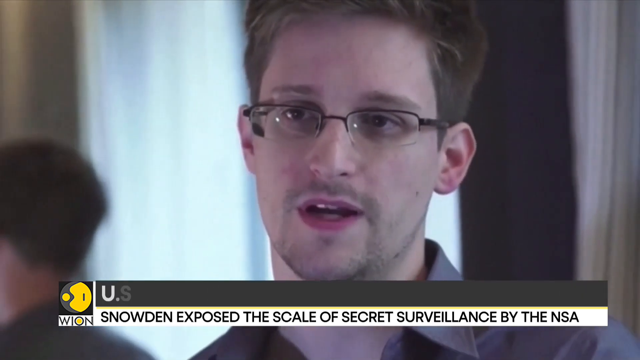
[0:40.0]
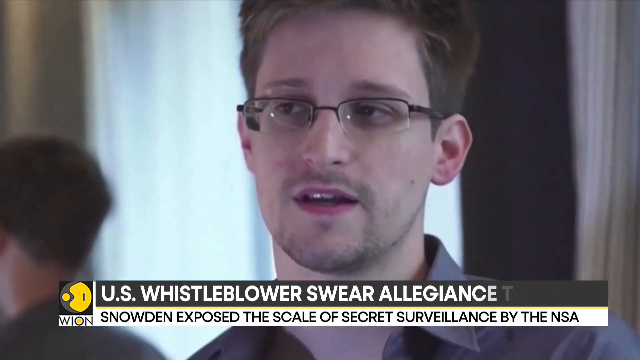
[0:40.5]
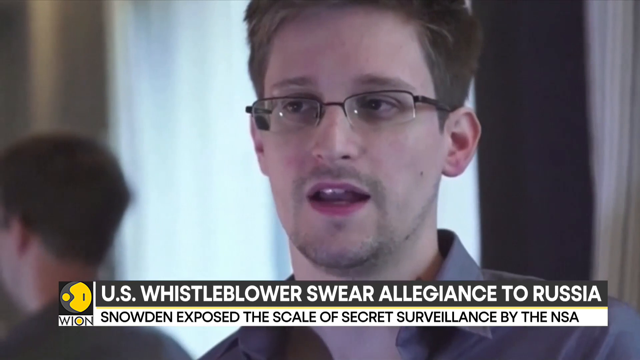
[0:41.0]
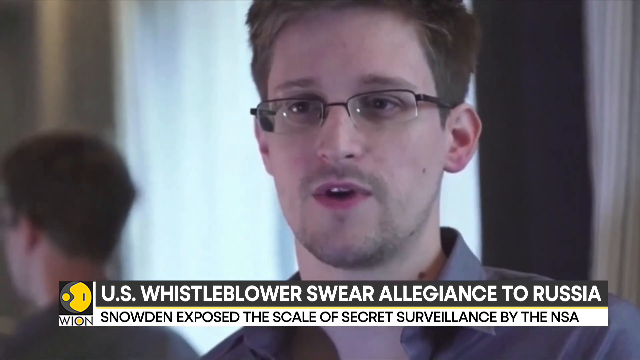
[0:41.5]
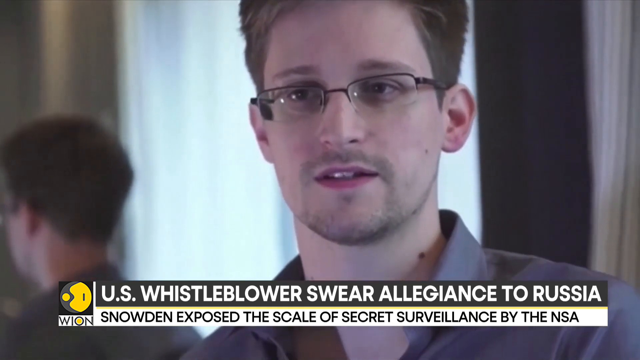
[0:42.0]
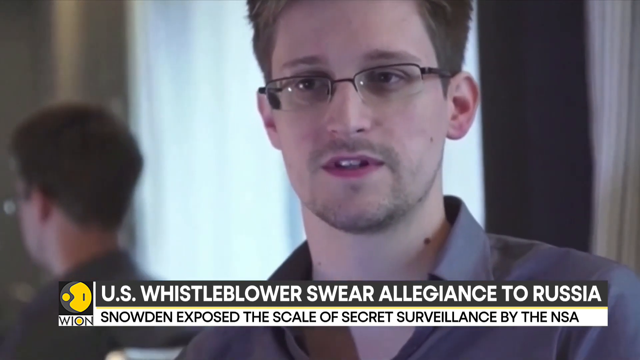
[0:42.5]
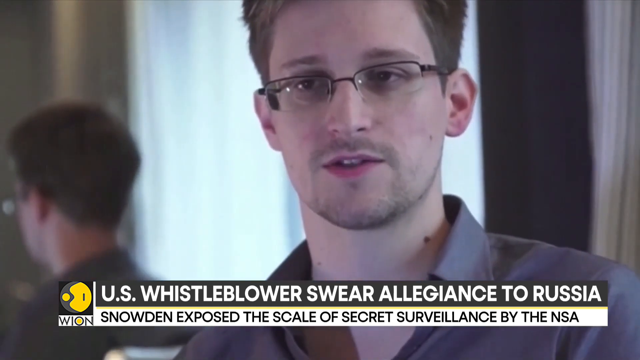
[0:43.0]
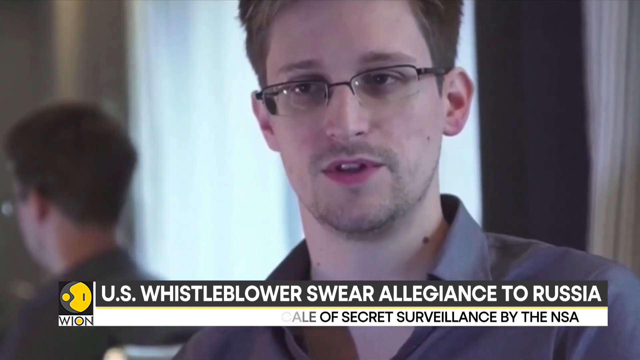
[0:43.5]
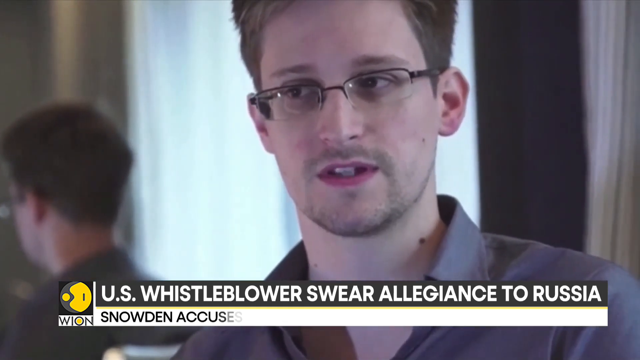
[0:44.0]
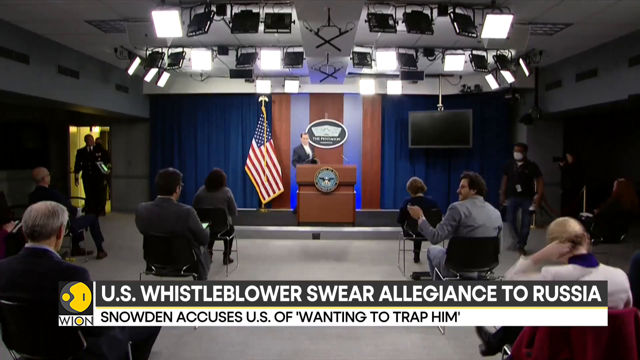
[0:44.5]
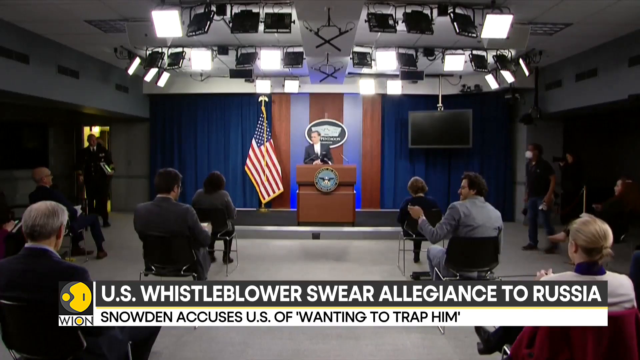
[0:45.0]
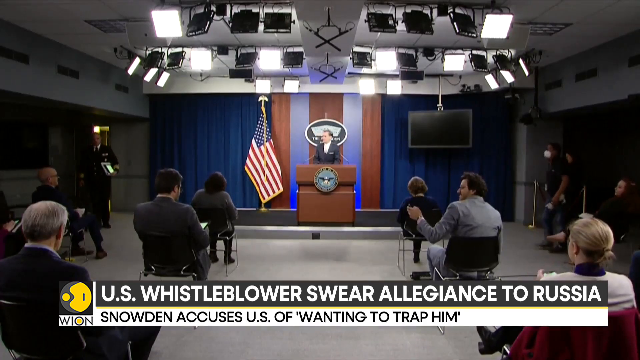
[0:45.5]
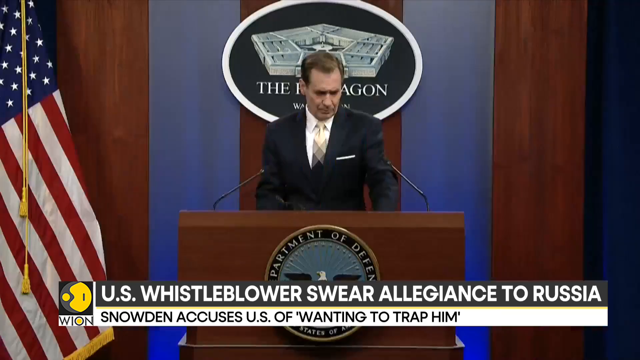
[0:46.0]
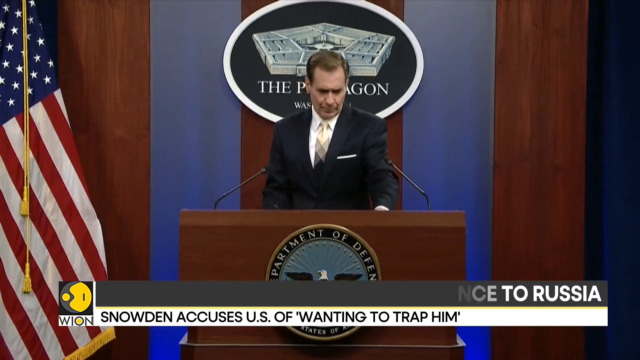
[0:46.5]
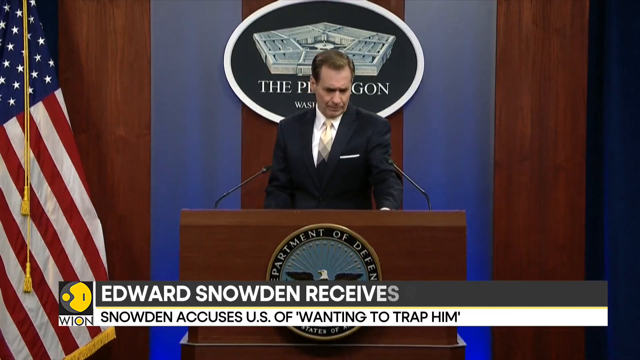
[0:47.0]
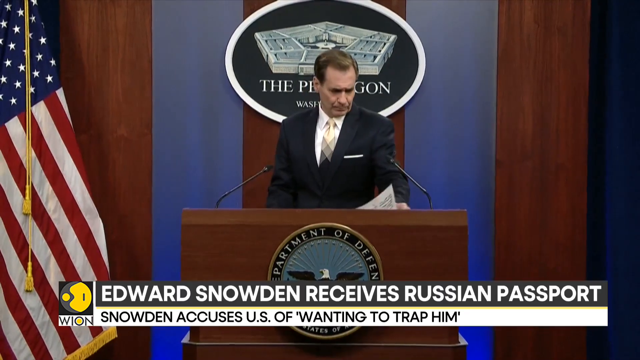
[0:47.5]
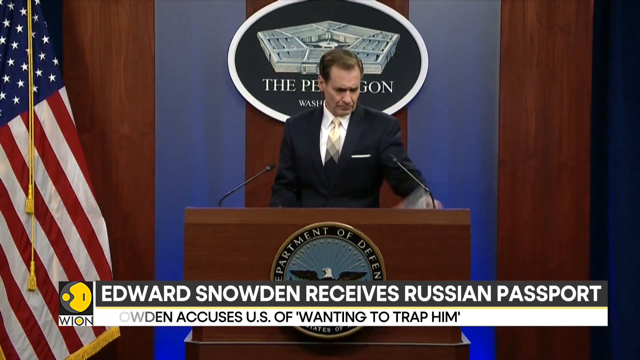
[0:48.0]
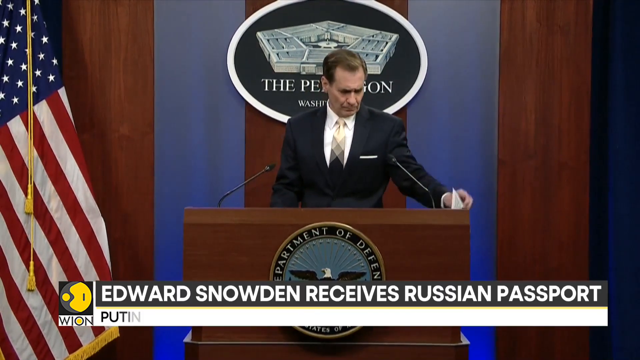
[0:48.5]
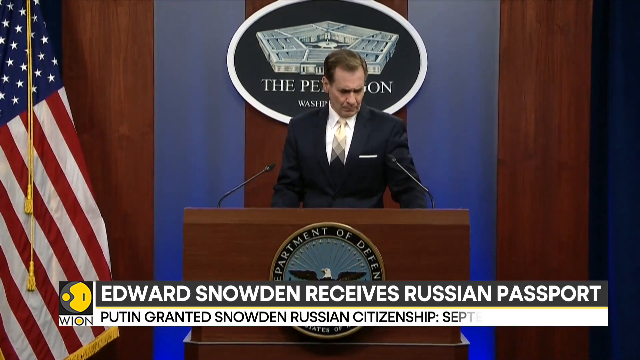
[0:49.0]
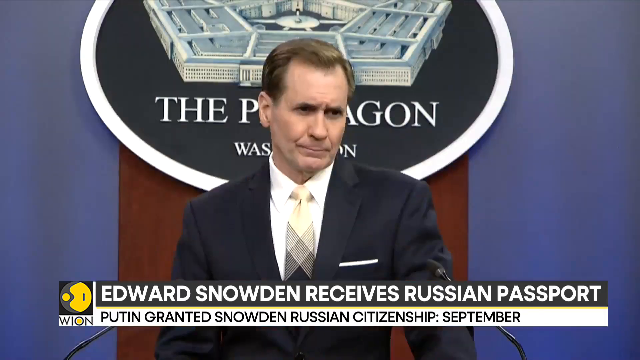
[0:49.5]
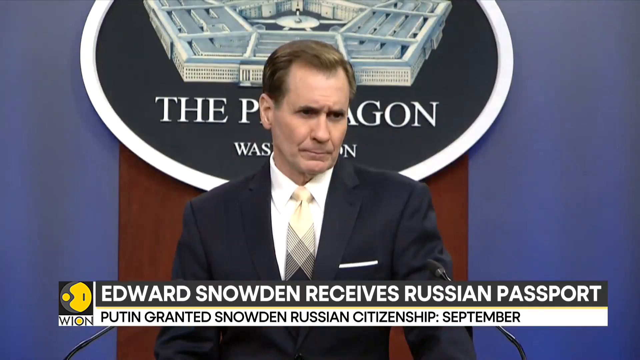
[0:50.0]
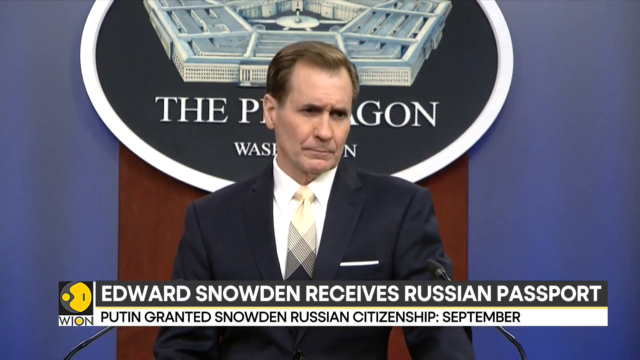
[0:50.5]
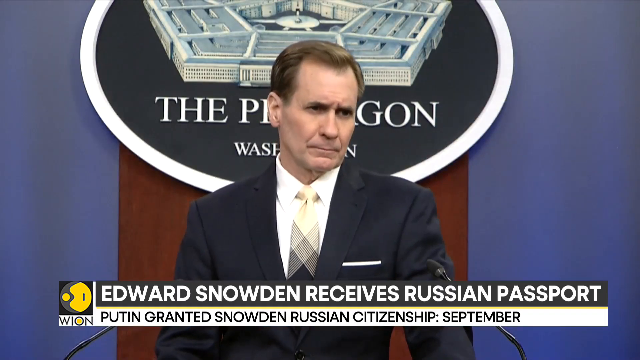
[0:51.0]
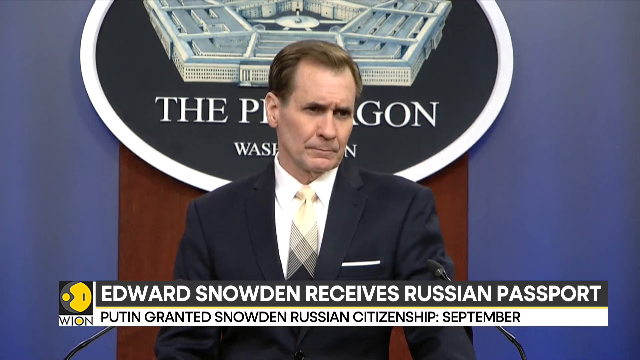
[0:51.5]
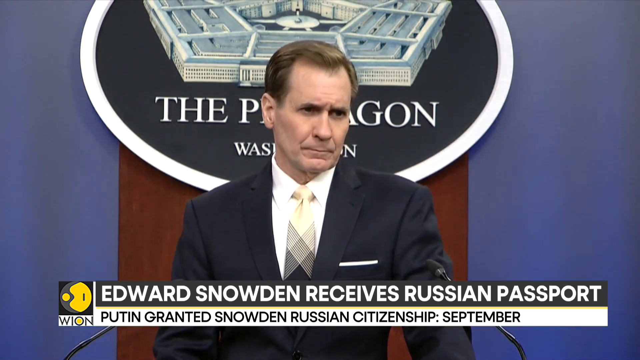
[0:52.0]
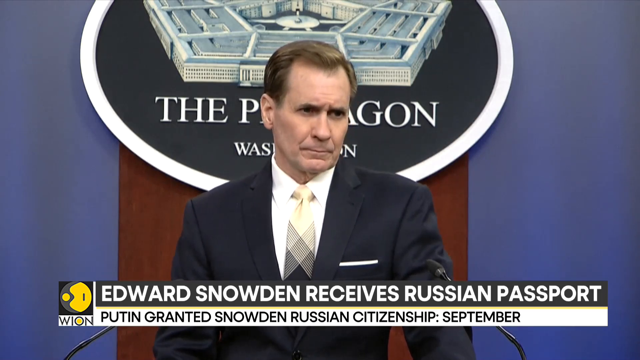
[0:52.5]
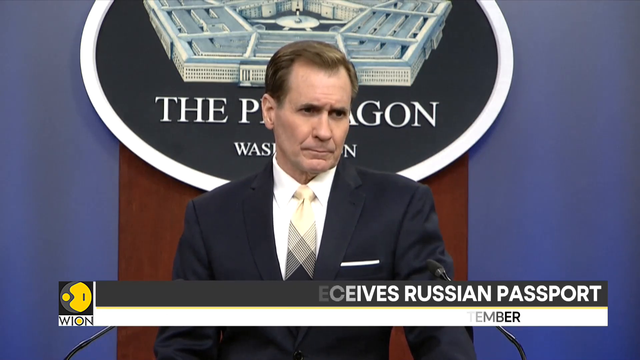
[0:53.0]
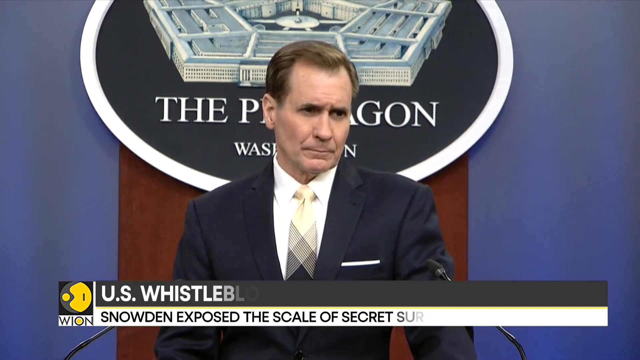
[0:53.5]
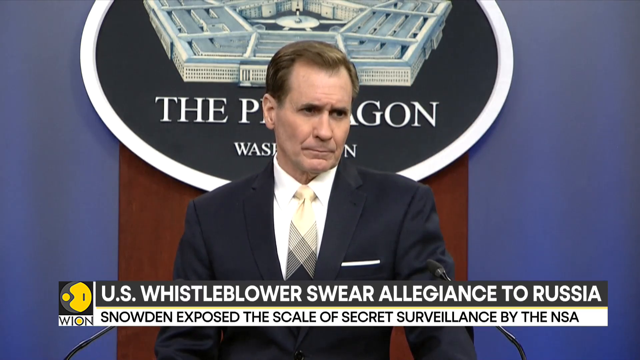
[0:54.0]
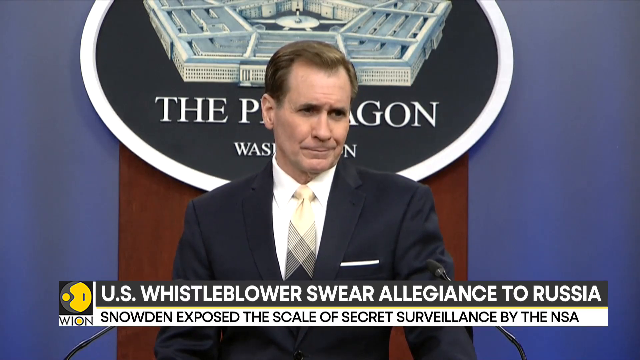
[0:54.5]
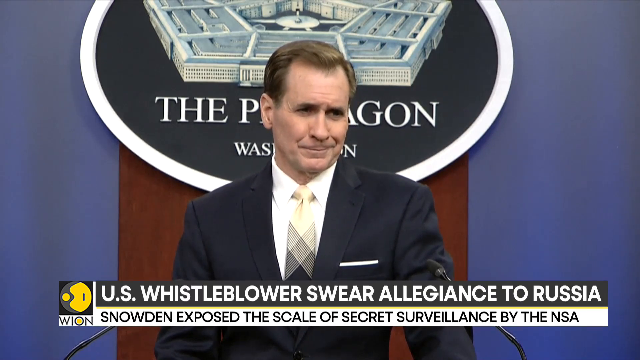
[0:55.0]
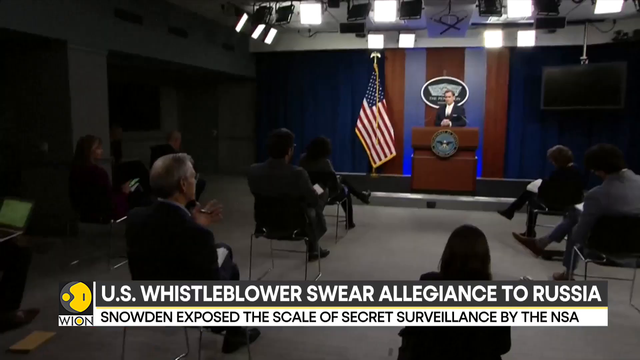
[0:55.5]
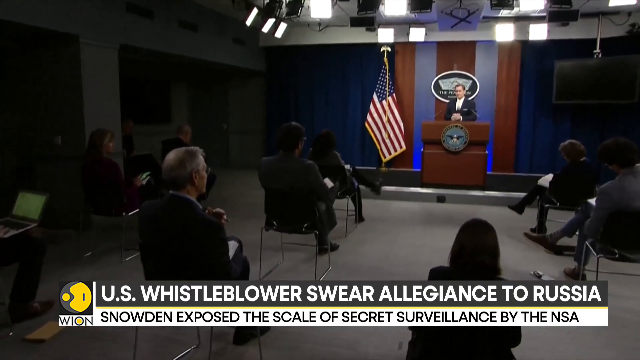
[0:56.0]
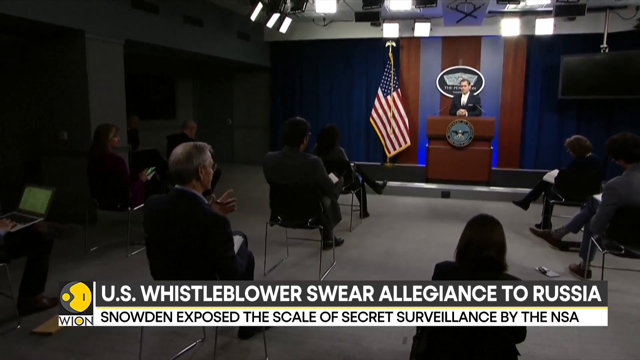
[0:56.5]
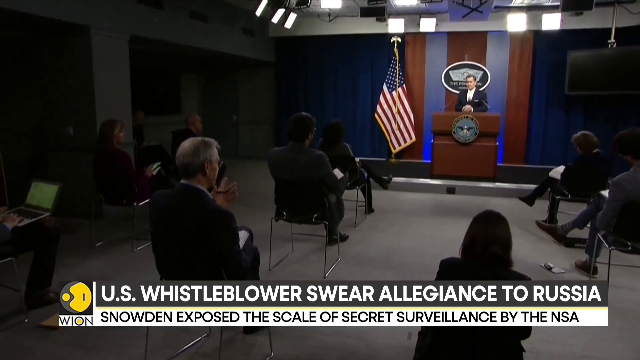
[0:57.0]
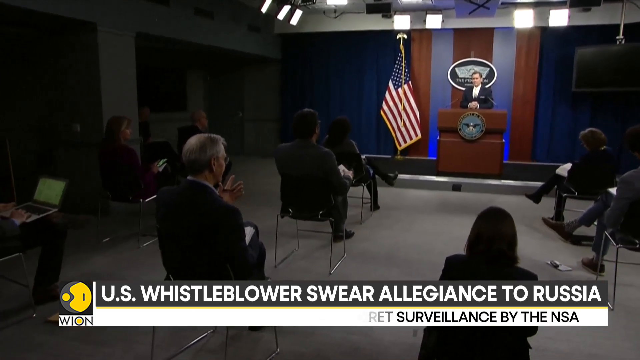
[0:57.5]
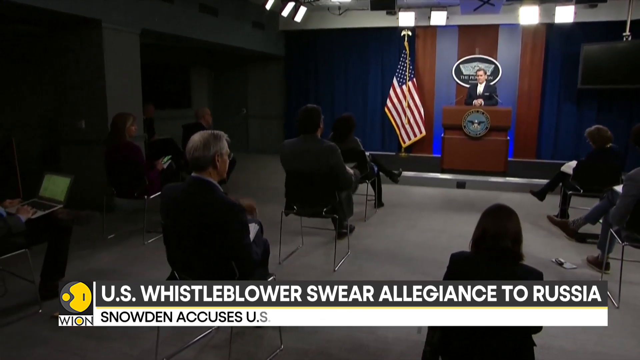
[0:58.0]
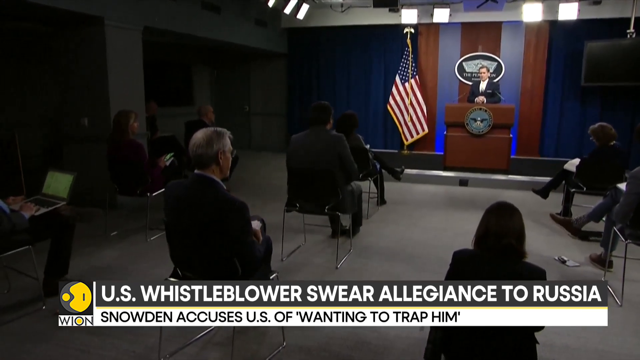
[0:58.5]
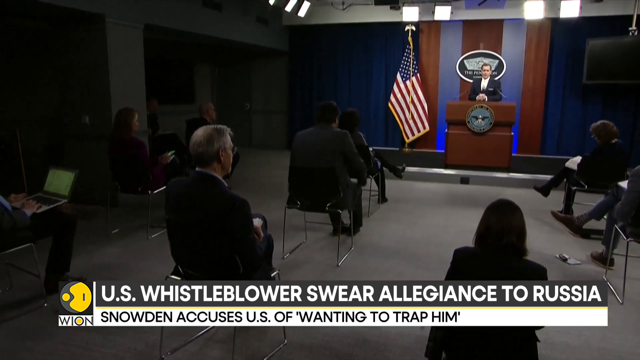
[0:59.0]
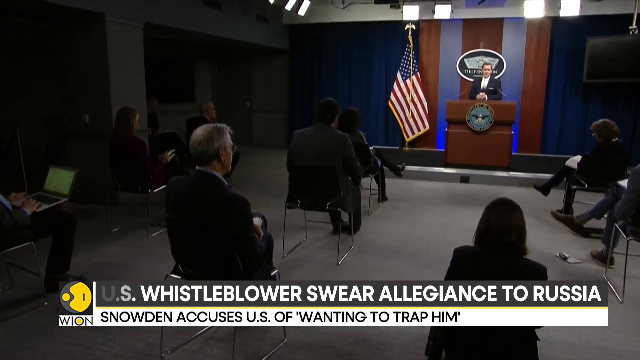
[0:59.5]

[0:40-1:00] The news story about Edward Snowden continues with a press conference. A Pentagon spokesperson stands in front of a Department of Defense podium, and text reads "the Pentagon, Washington" along with "Edward Snowden accuses U.S. of wanting to trap him." He is seen talking again, and then the sparsely populated press room appears: it has only about six chairs, and the few reporters present are not close together. One mask is visible.